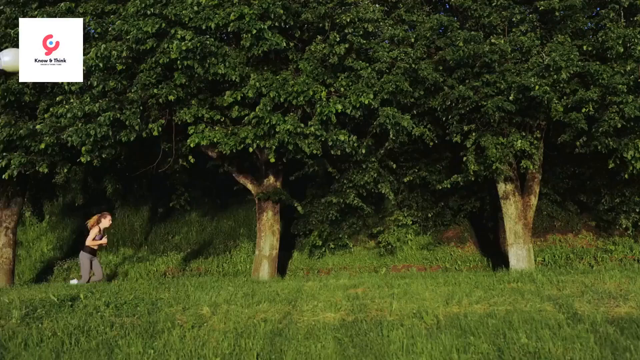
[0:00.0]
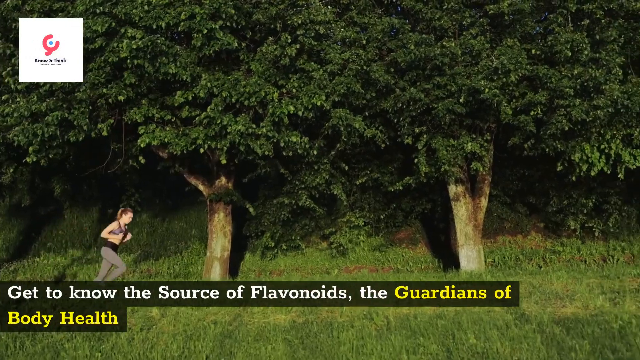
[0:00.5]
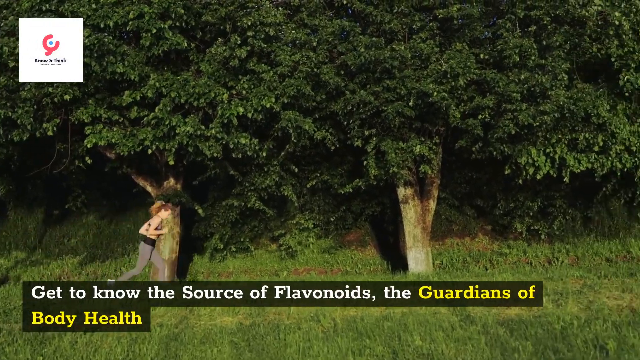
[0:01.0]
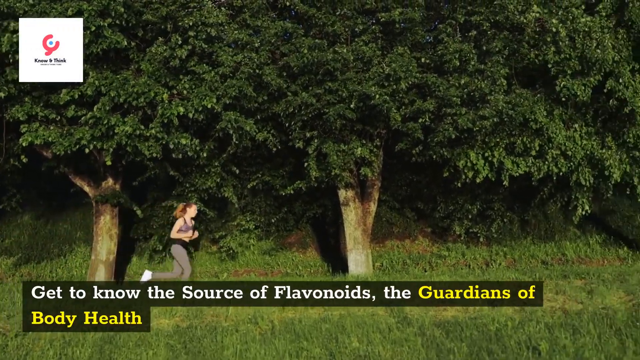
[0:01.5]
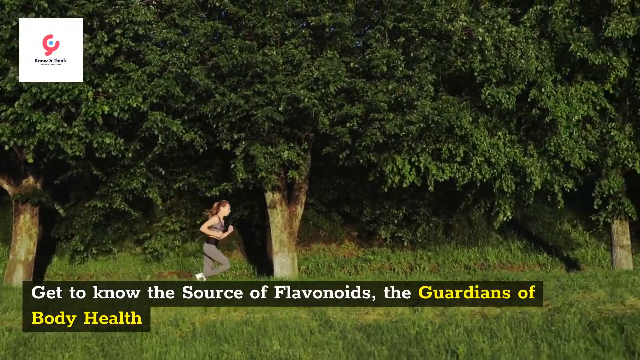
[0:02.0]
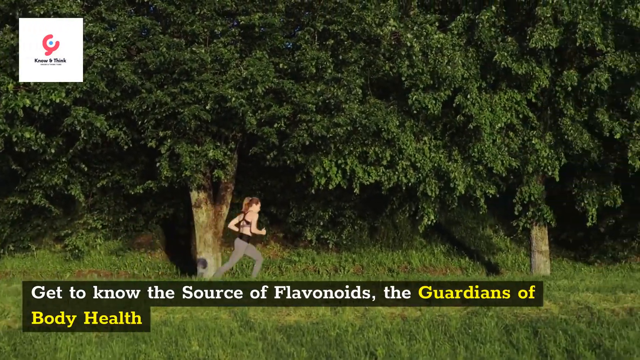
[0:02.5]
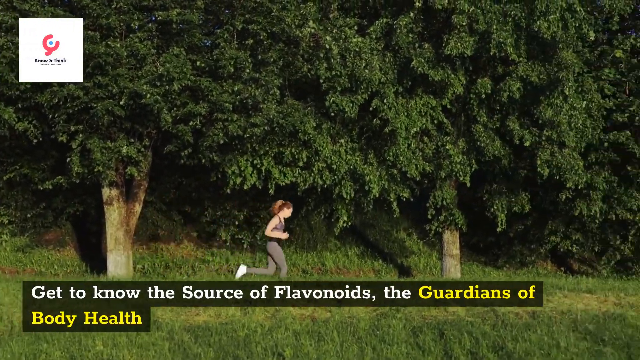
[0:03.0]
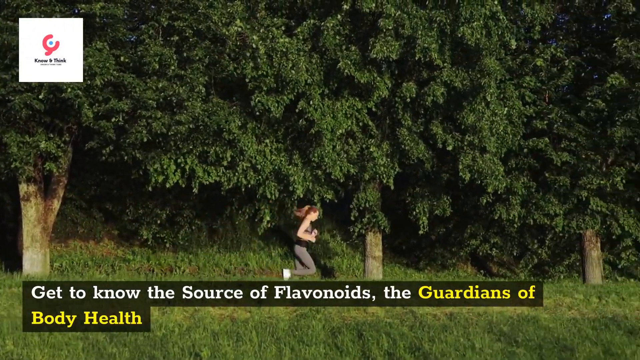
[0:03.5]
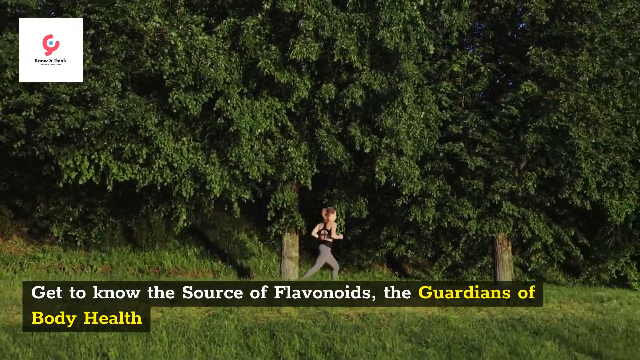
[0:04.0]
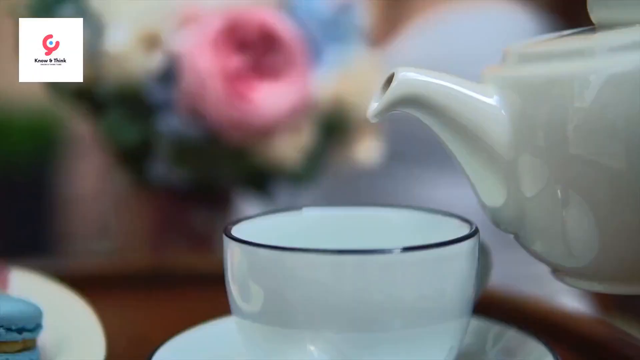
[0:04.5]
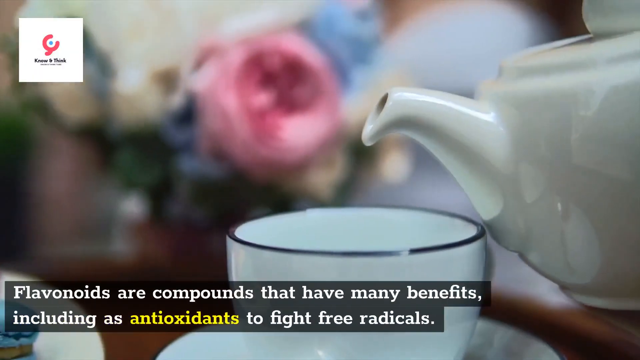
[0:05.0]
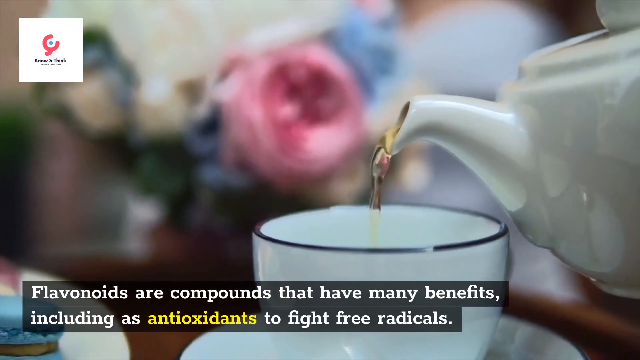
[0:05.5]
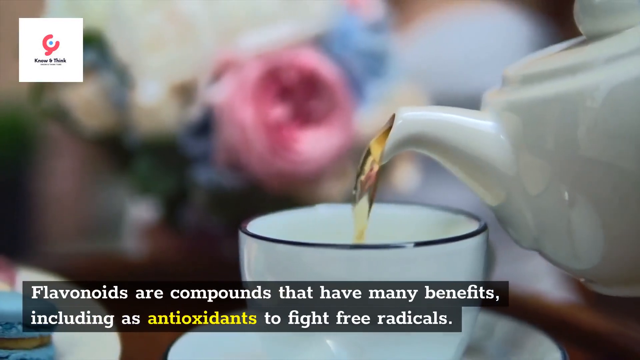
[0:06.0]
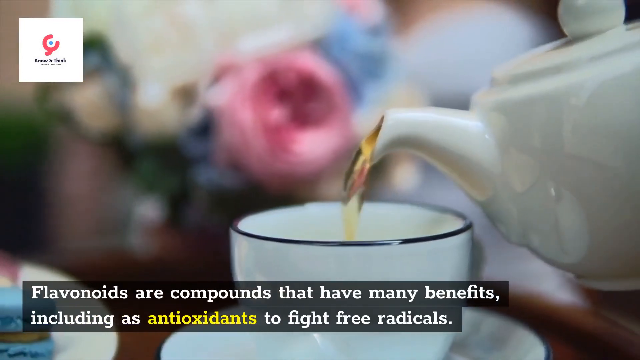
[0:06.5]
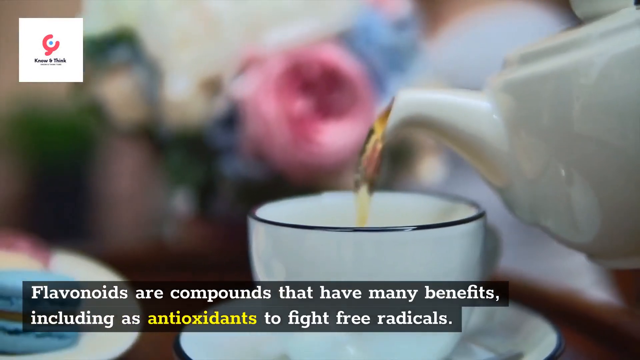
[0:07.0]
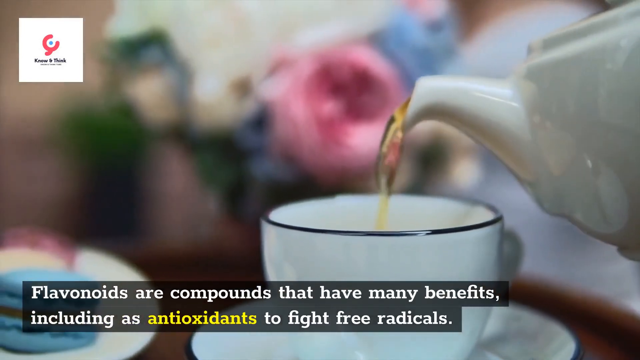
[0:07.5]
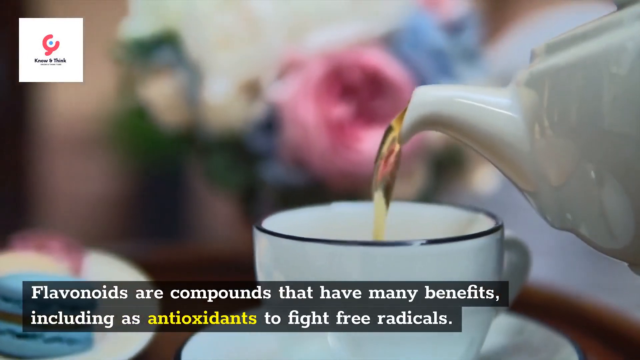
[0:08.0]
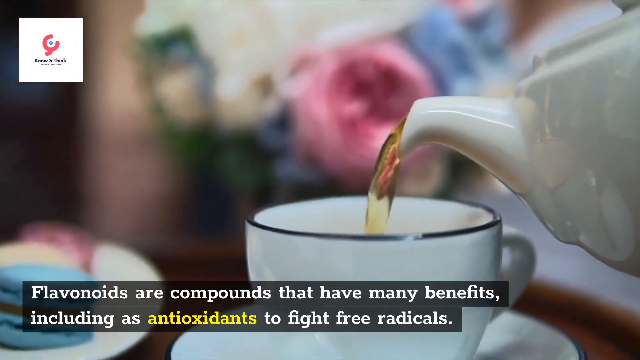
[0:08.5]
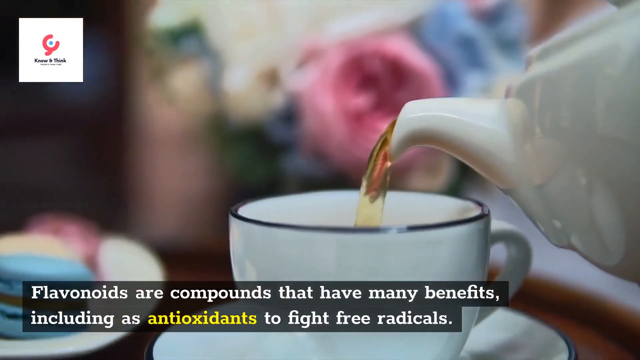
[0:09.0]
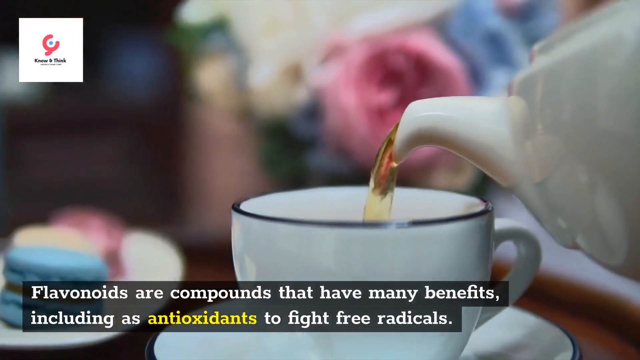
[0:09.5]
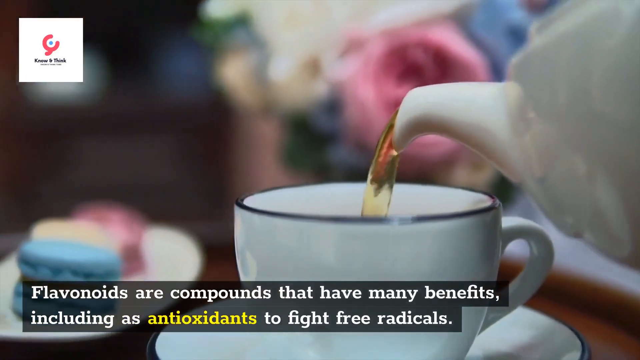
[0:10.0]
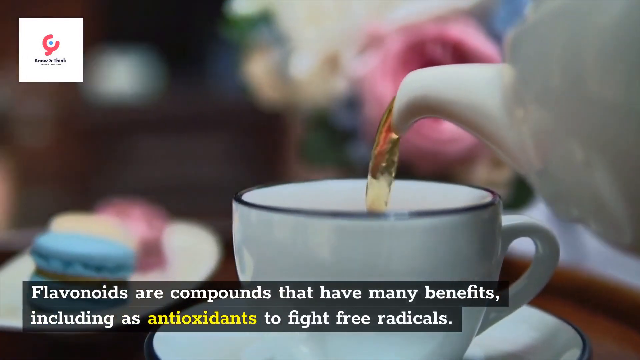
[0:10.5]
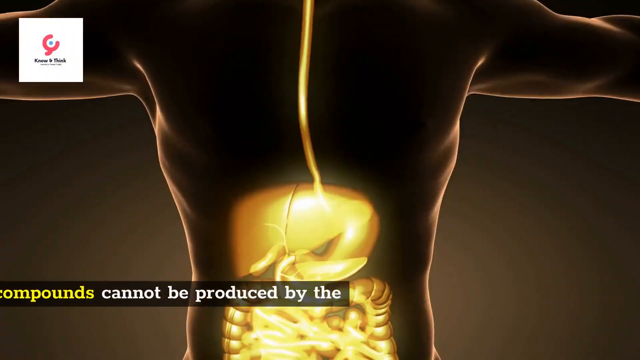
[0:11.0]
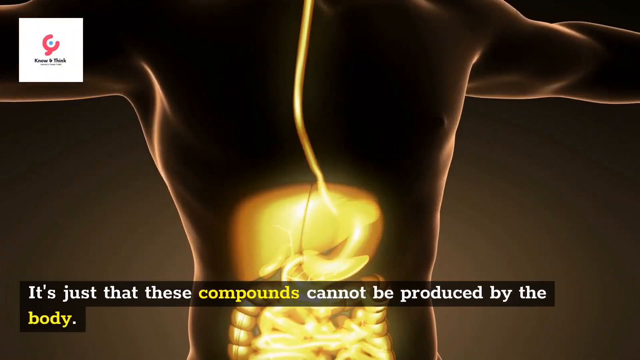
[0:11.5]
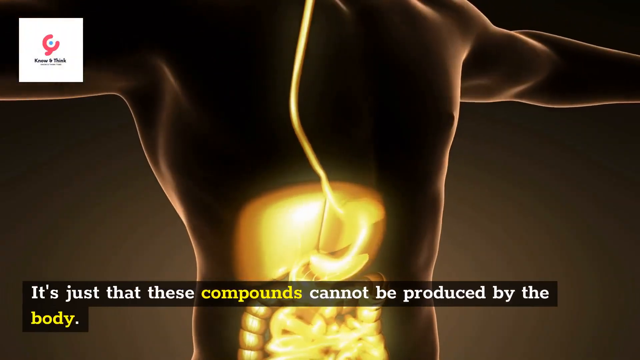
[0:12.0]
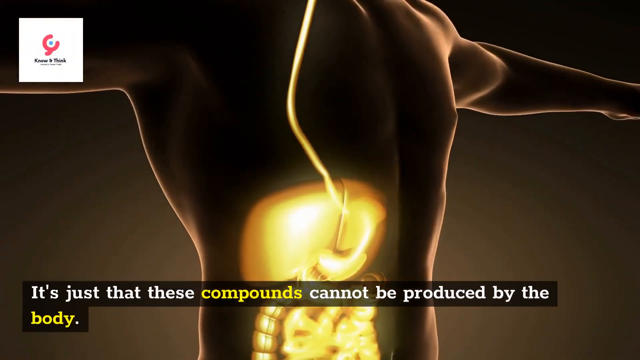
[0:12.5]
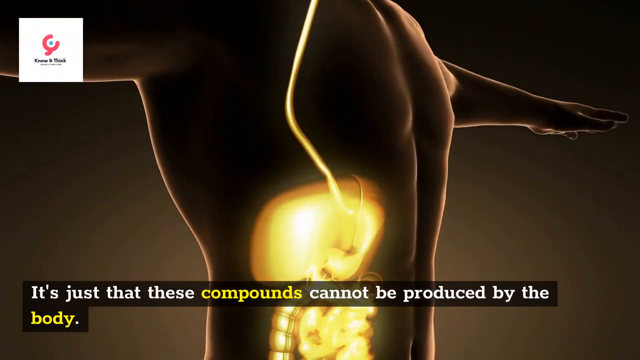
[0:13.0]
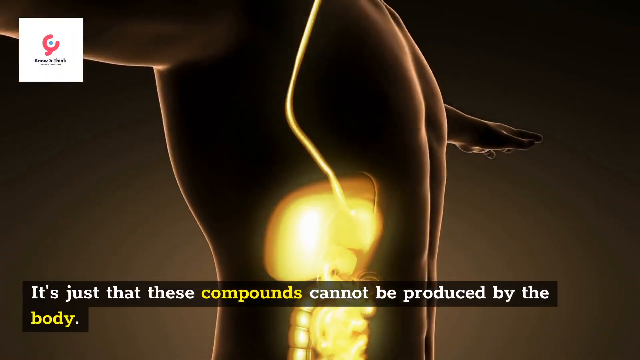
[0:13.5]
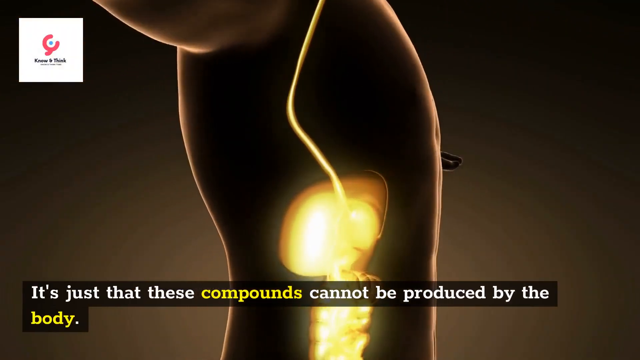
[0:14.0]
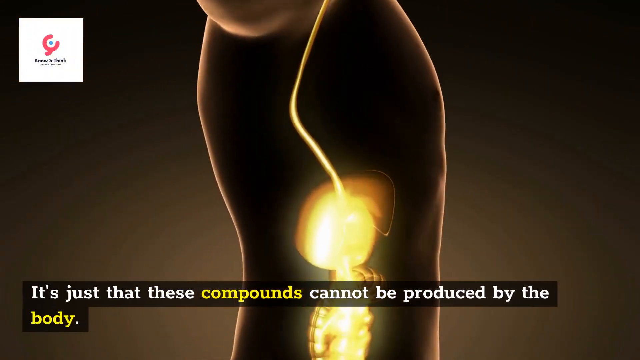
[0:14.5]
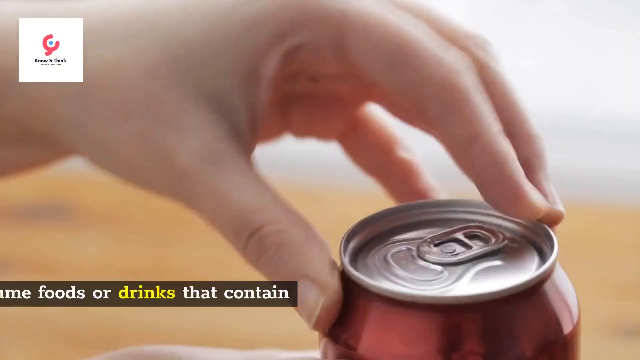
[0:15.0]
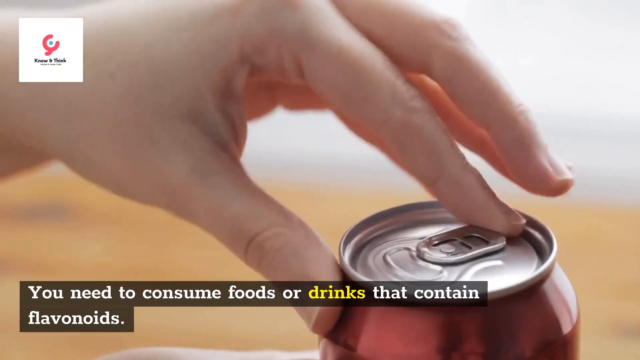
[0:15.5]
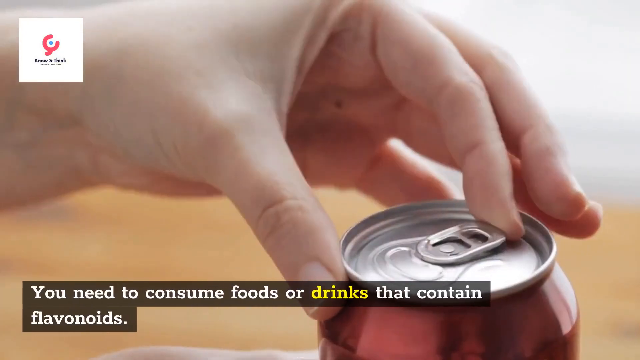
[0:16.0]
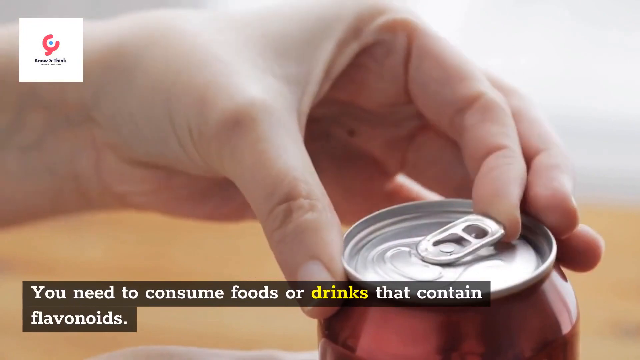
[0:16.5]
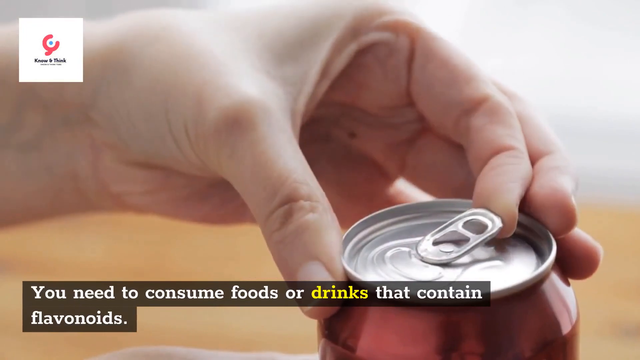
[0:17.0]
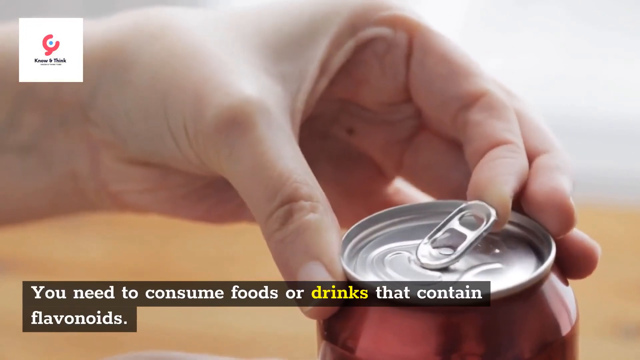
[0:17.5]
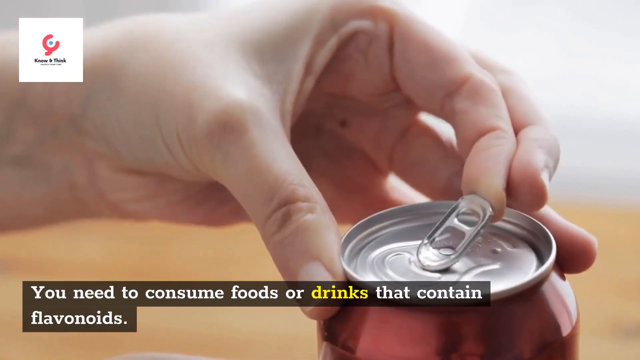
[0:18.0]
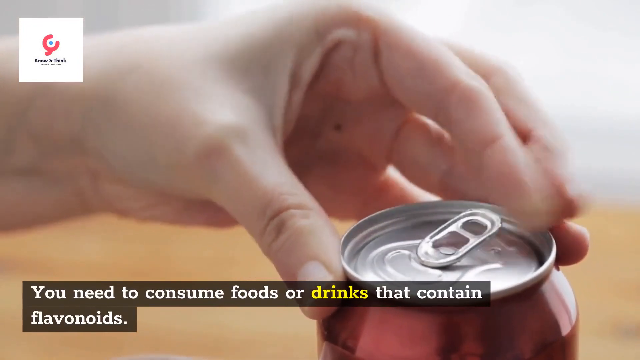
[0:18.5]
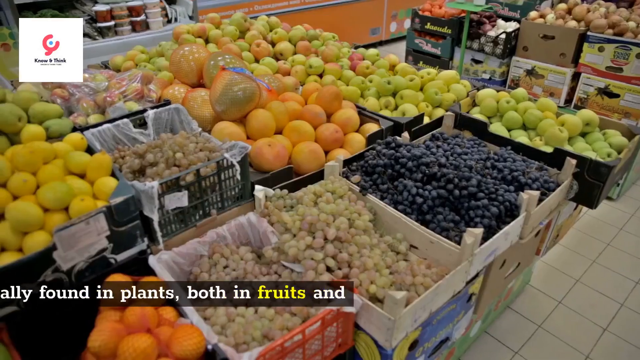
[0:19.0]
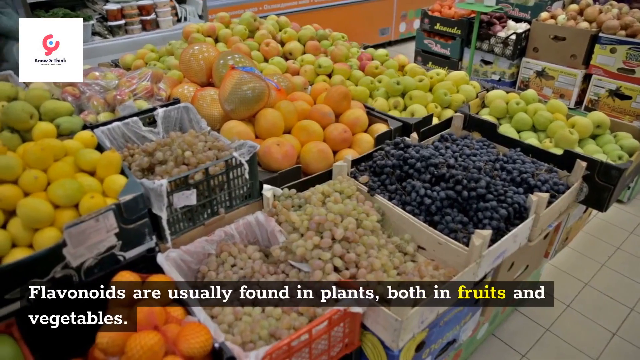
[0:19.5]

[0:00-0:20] A woman runs on a path in what looks to be a park-type setting, with a lot of foliage and large trees behind her. Information about flavonoids appears on the screen, describing them as guardians of body health. The scene transitions to a close-up of a teapot pouring a light-colored tea into a glass or porcelain cup, with a bouquet of flowers behind the teapot and cup. After the tea is poured, an animated, clearly artificial body appears on the screen showing some of the internal organs, with the path from the mouth to the stomach highlighted. Another transition shows a can being opened; only a hand is visible, pulling the can's tab. A final transition shows the produce section of a grocery store, with a large group of different fruits and vegetables in their stands.